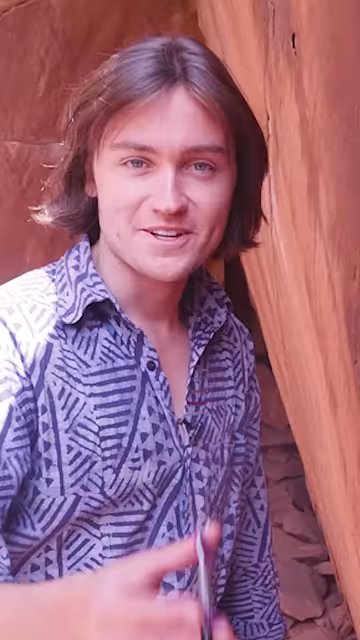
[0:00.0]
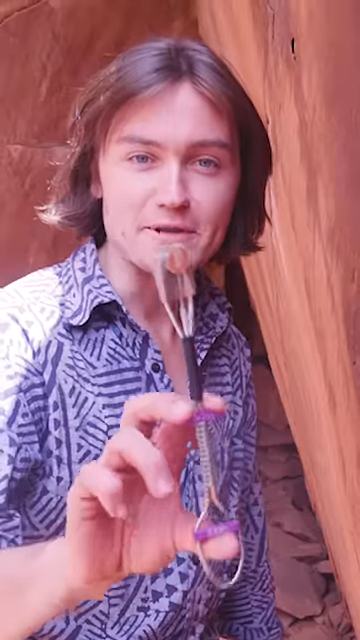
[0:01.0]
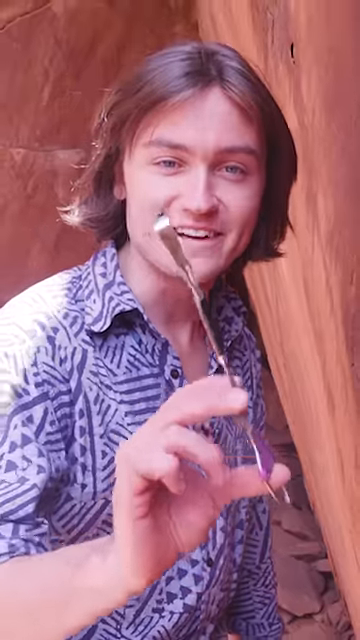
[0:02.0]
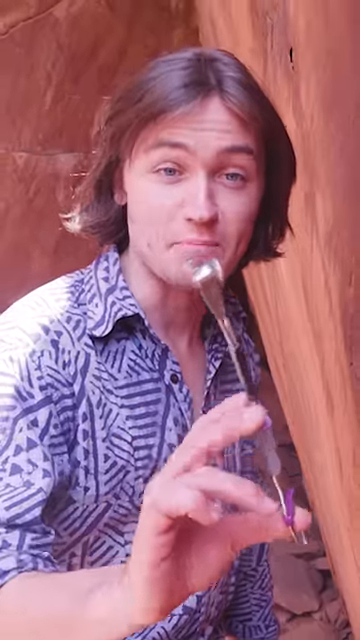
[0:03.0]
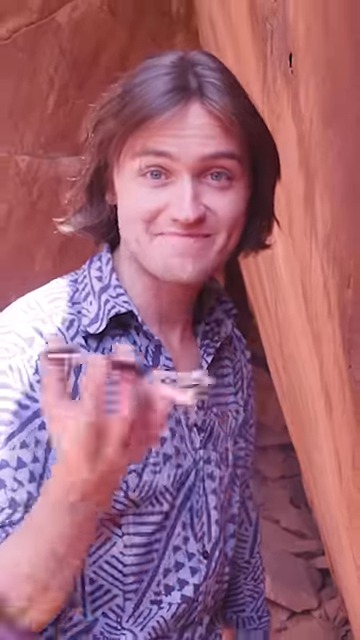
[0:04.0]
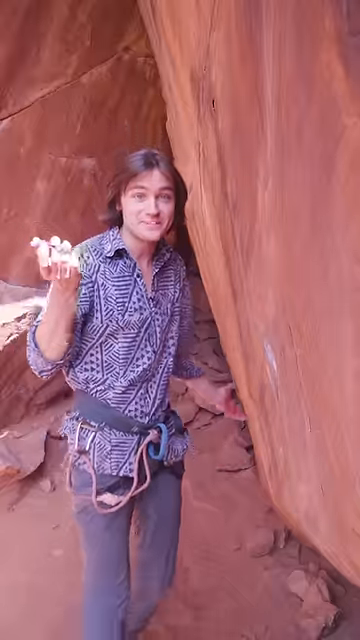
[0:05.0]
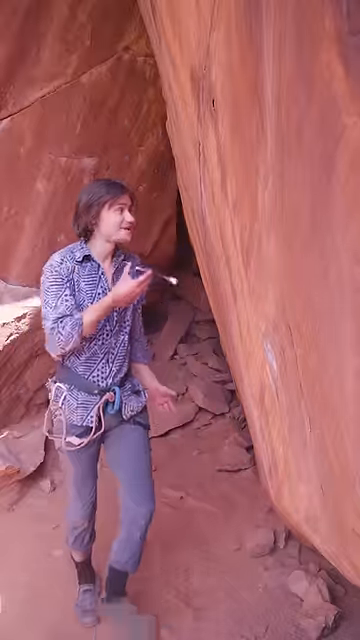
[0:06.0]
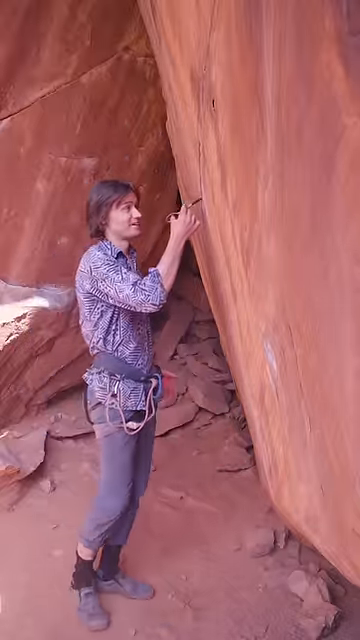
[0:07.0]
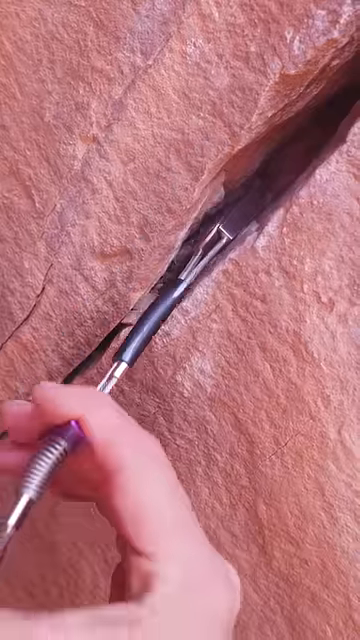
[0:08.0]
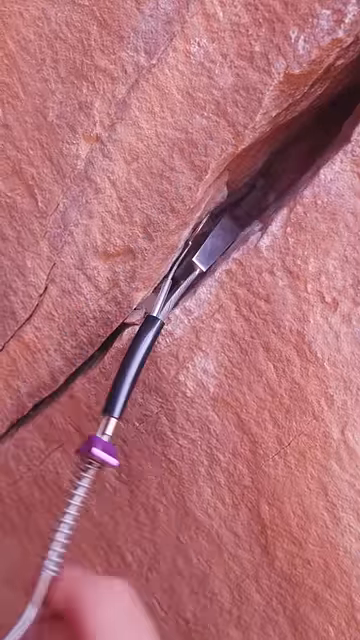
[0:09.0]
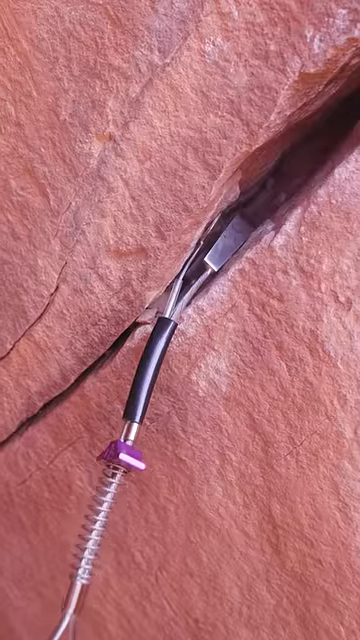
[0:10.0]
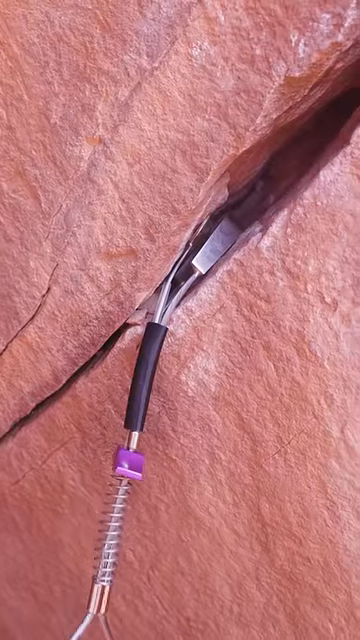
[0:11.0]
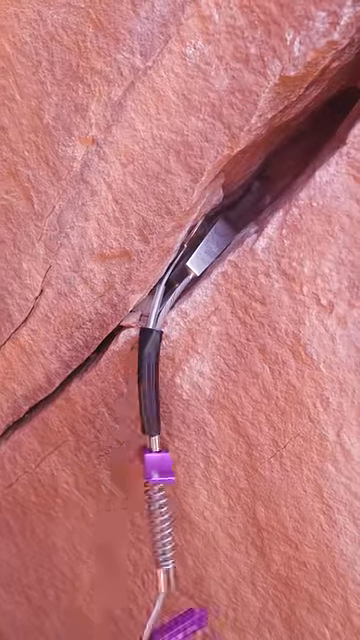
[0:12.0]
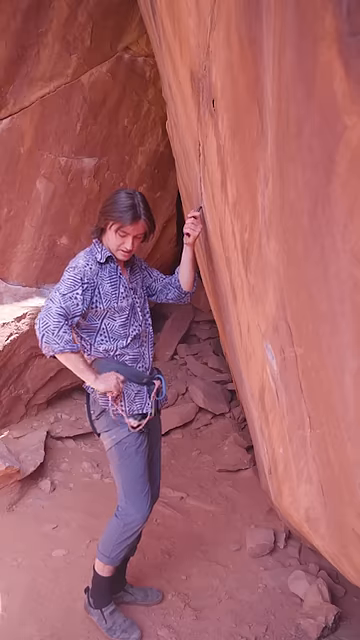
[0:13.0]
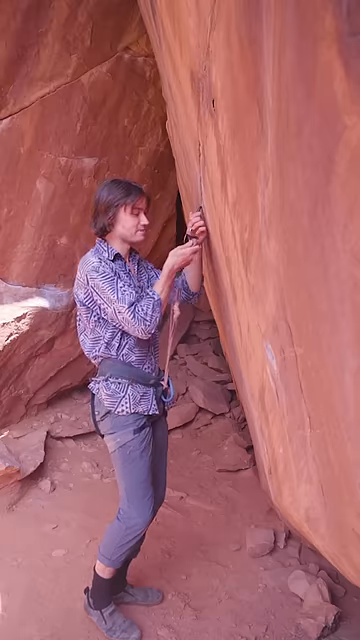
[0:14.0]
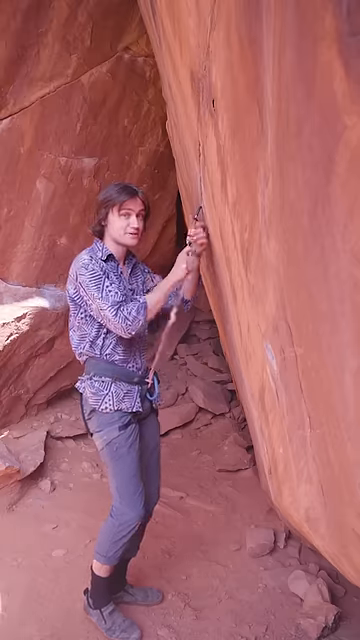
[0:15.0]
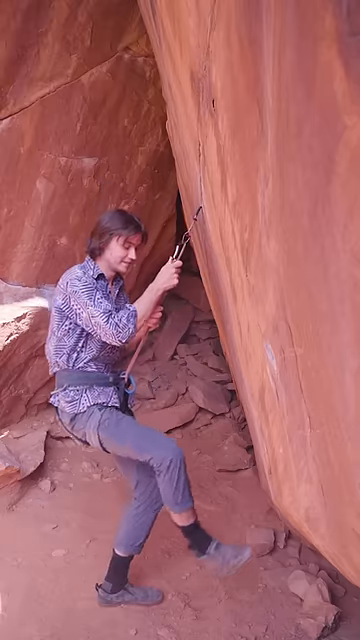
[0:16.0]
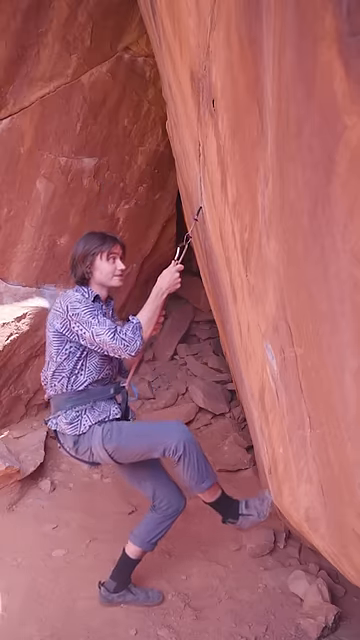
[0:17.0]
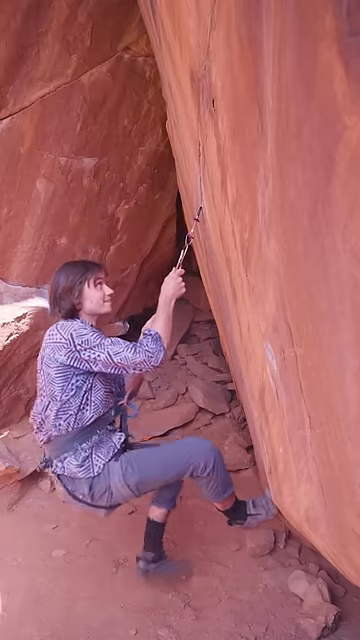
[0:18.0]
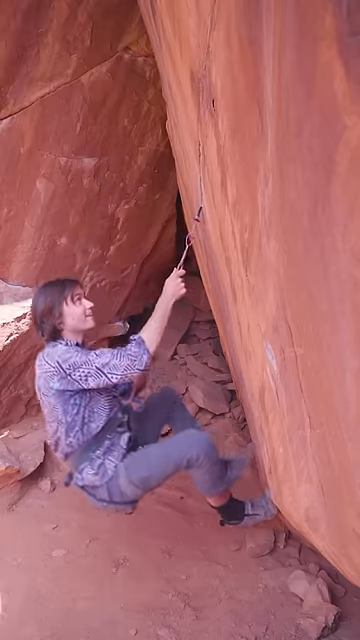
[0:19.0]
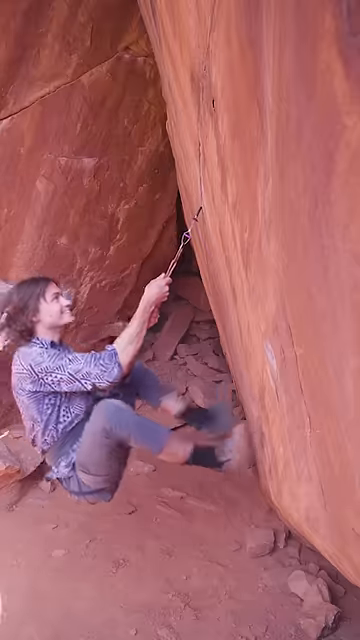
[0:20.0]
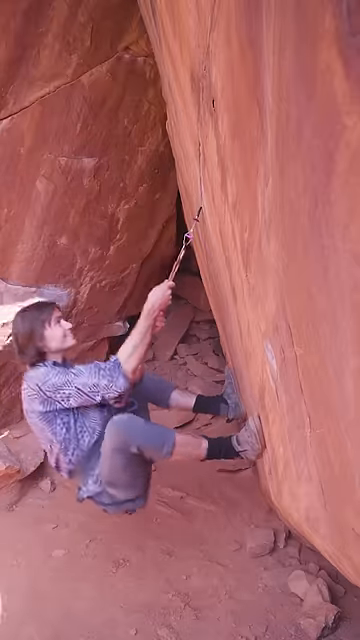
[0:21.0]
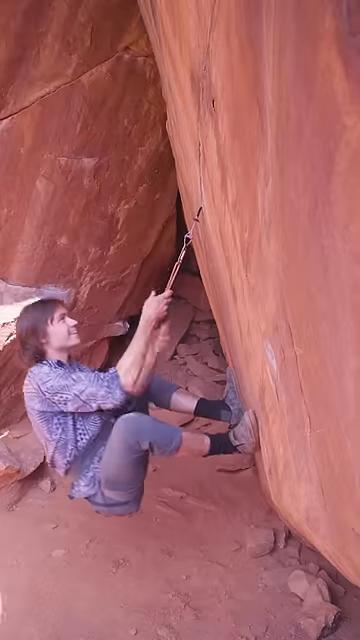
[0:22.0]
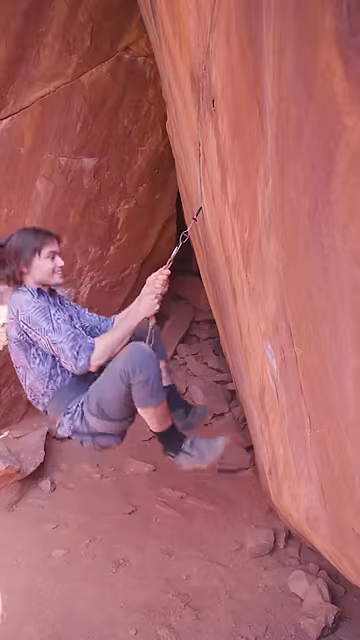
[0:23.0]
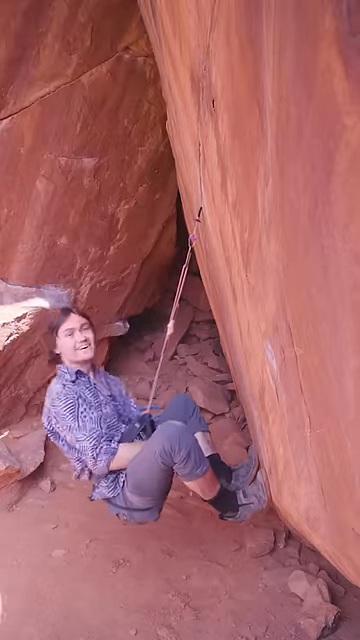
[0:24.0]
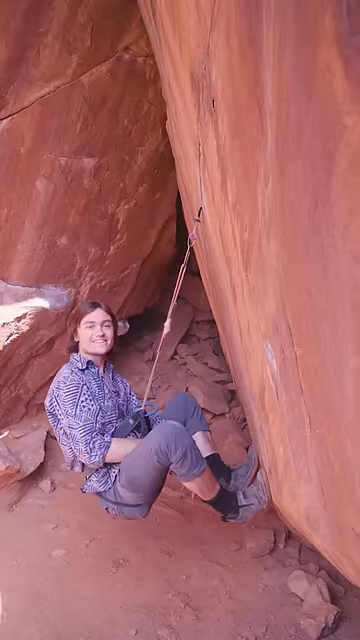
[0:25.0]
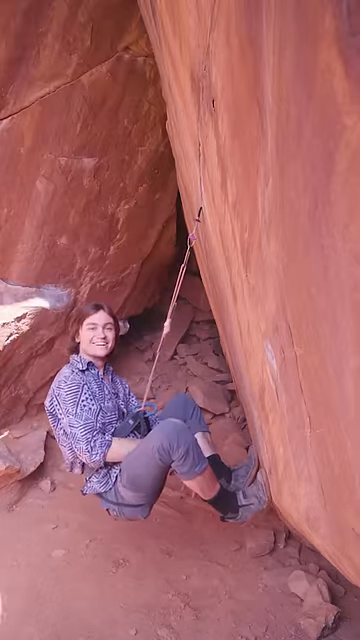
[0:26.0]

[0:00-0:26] In a video called weight testing a ball nut, a ball nut apparently serves as rock climbing gear. A man strapped into a harness slips the ball nut into a crack in a rock, then attaches it to his harness and dangles from the rock, showing how much weight the ball nut can hold. He looks eccentric, wearing a shirt filled with stripes, capri-like pants with tall socks, and what look like climbing shoes. He seems very comfortable with the ball nut, as if he has used it before; although he is close to the ground on the rock, he does not look nervous or scared of falling or injuring himself.